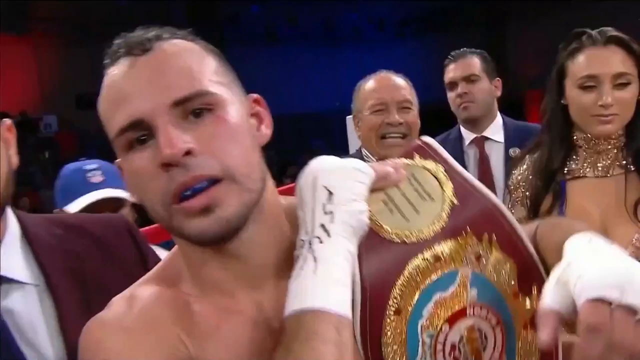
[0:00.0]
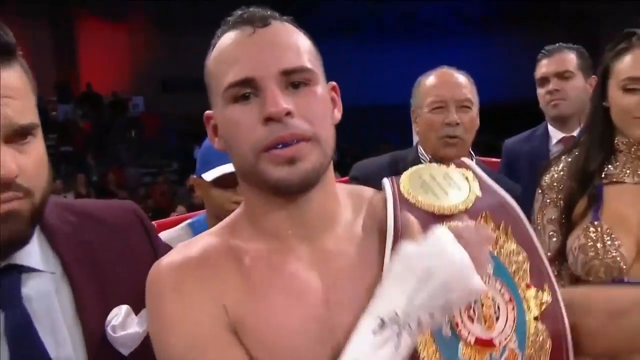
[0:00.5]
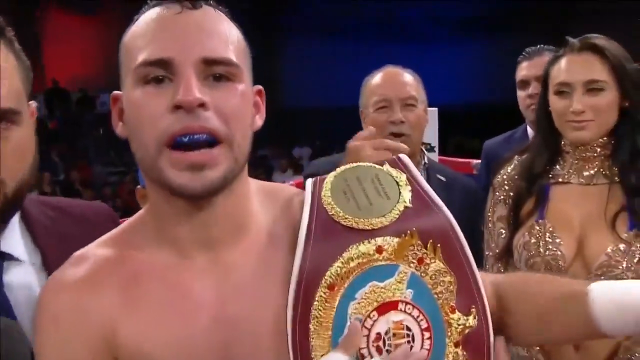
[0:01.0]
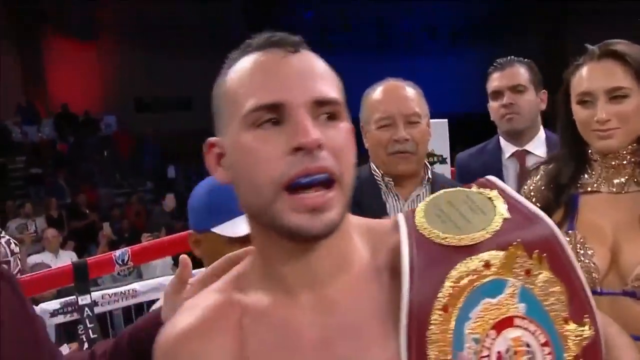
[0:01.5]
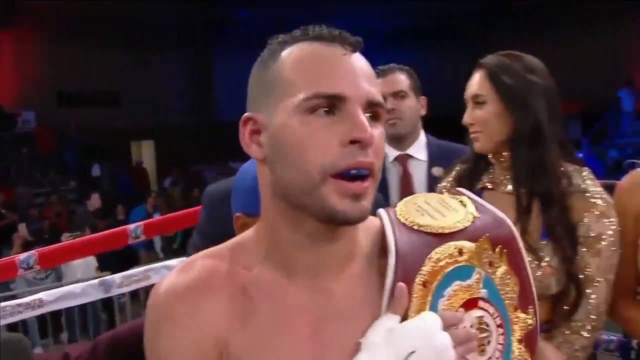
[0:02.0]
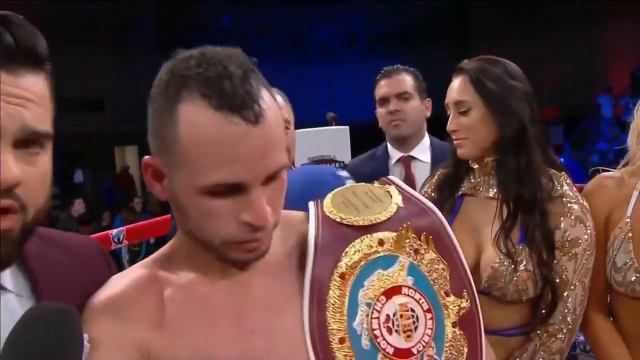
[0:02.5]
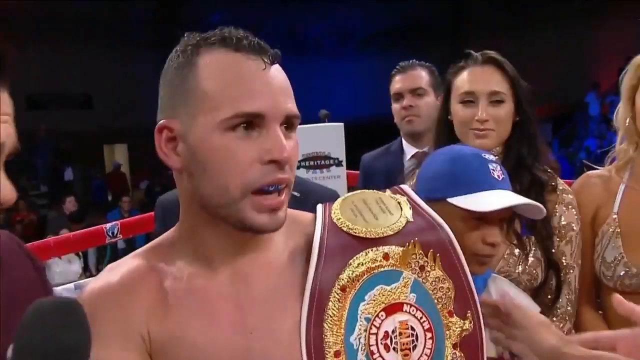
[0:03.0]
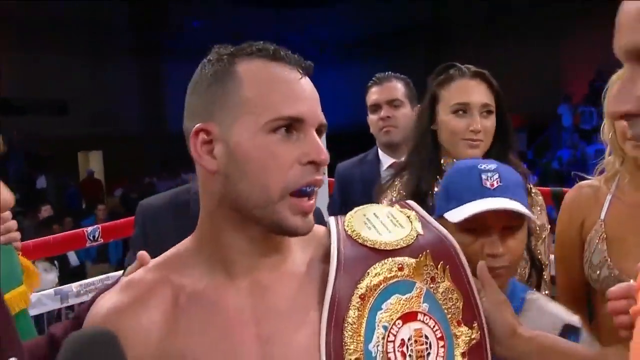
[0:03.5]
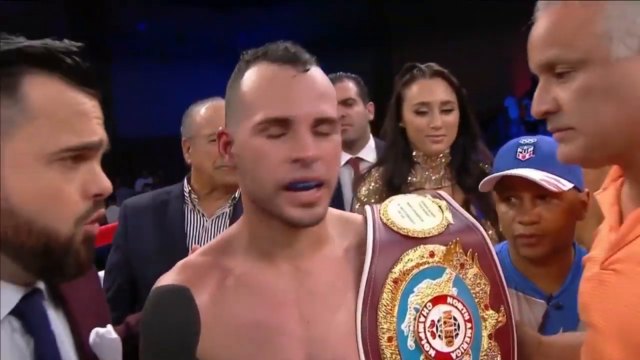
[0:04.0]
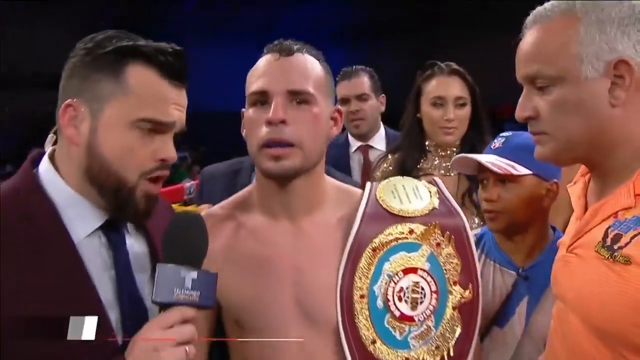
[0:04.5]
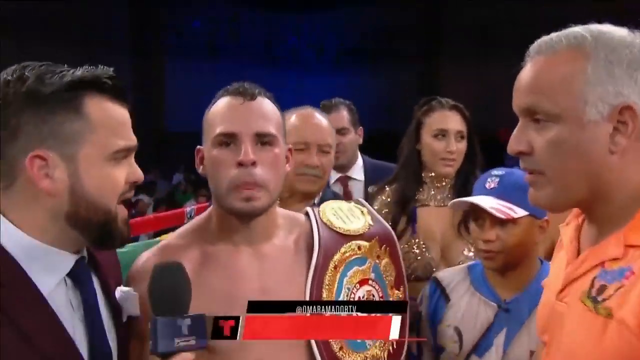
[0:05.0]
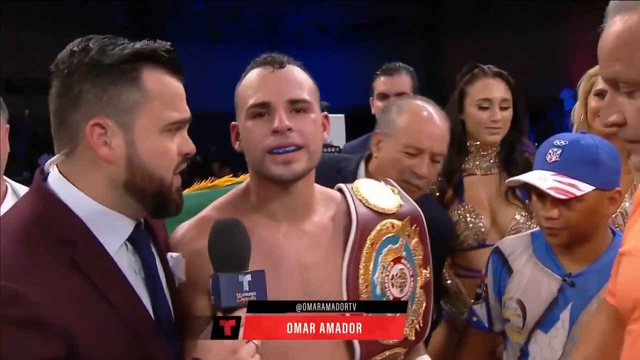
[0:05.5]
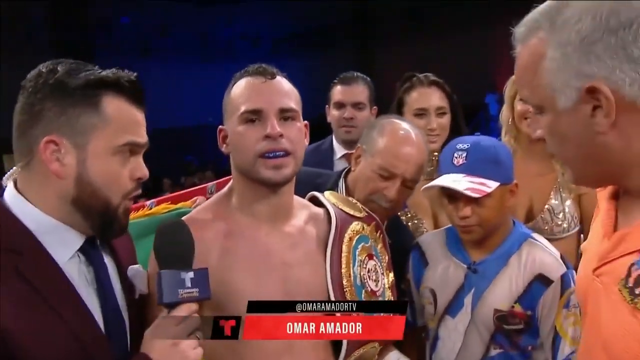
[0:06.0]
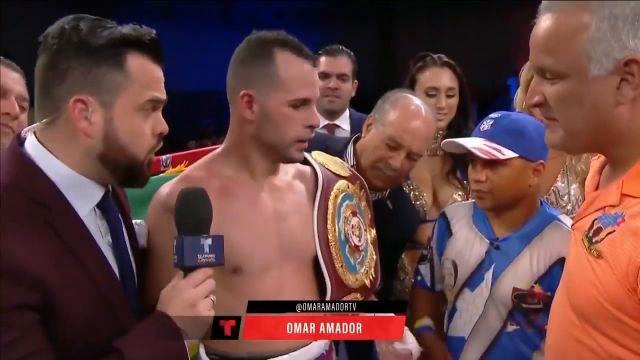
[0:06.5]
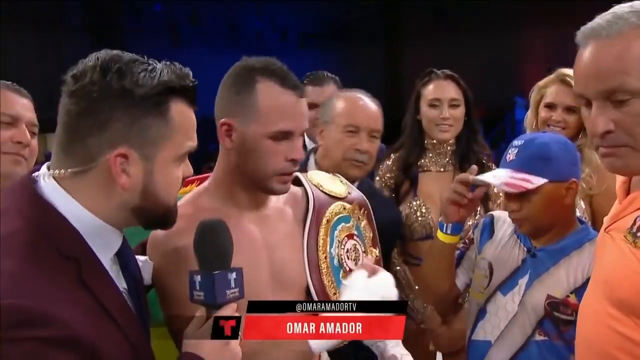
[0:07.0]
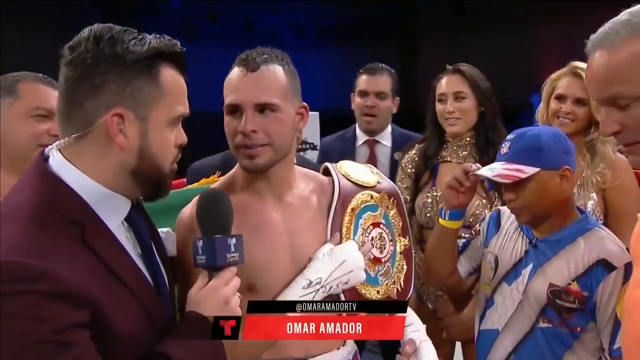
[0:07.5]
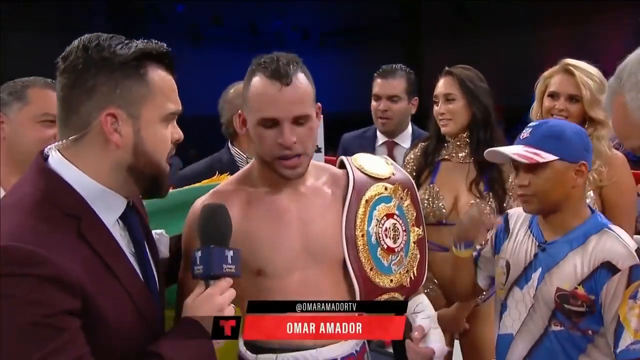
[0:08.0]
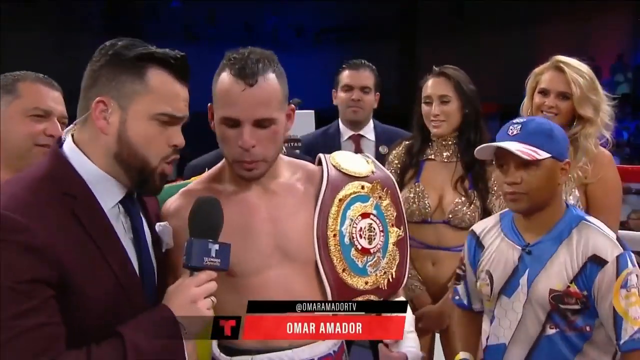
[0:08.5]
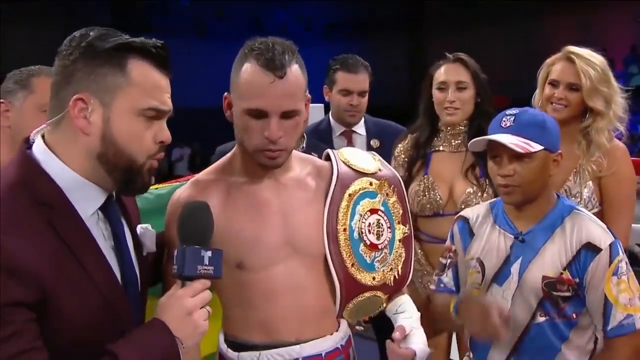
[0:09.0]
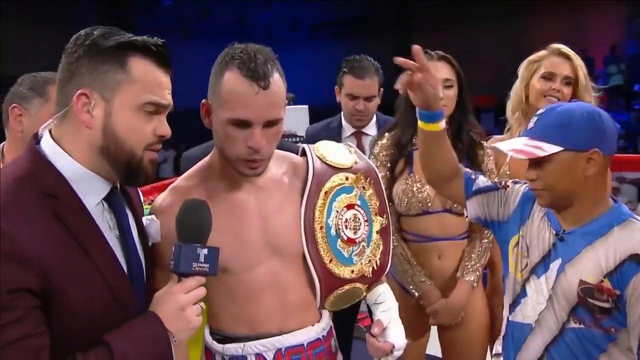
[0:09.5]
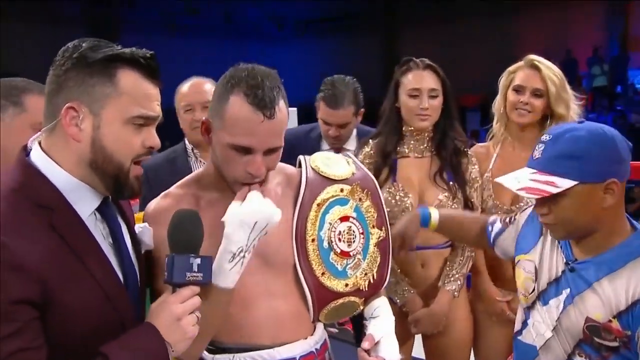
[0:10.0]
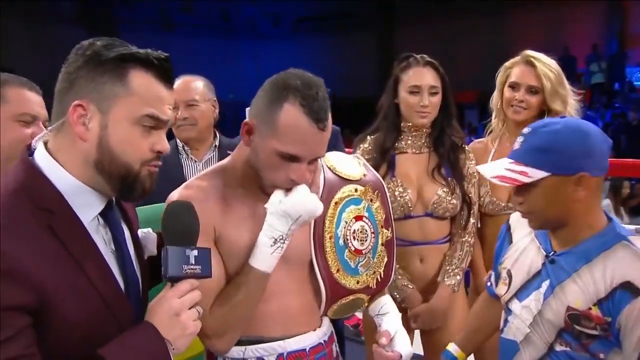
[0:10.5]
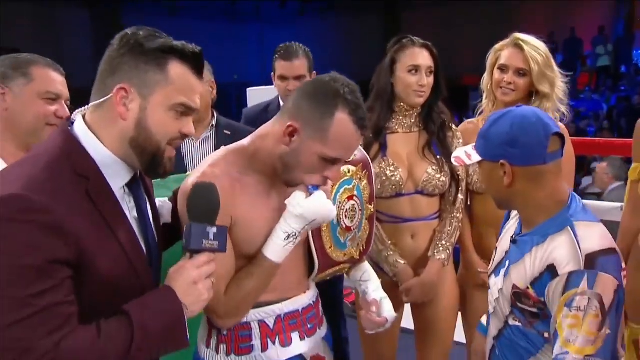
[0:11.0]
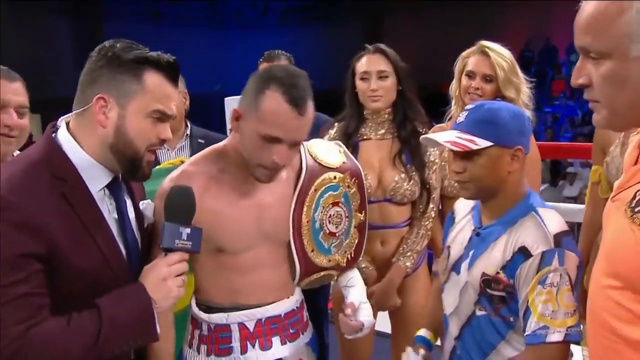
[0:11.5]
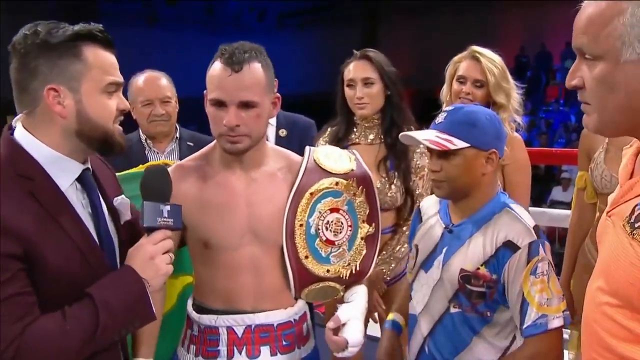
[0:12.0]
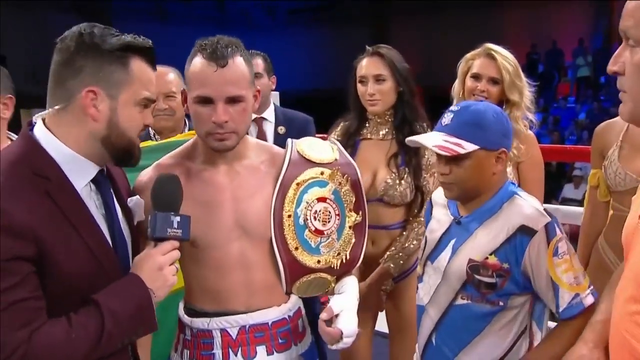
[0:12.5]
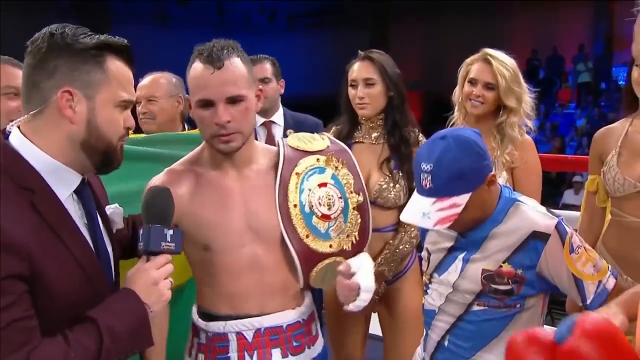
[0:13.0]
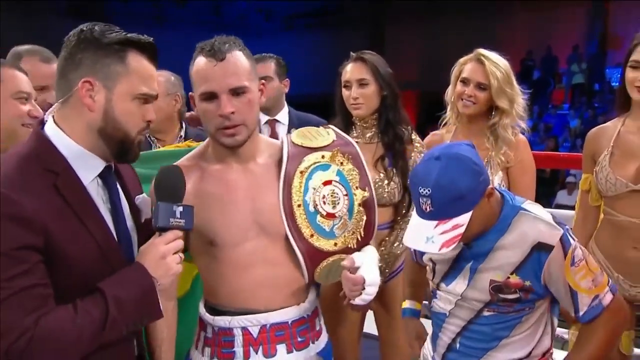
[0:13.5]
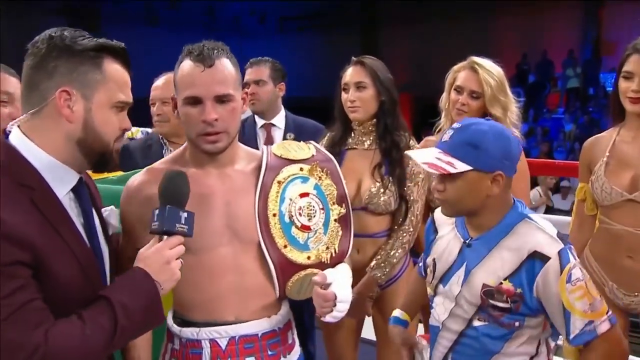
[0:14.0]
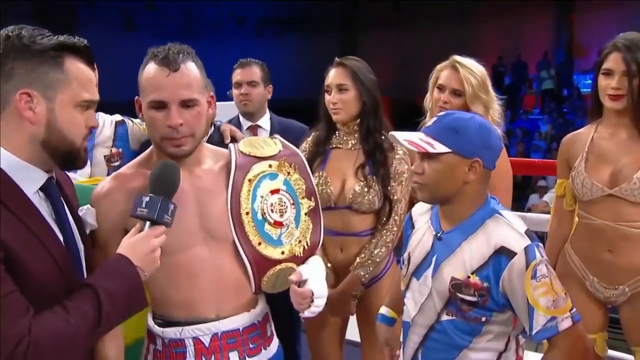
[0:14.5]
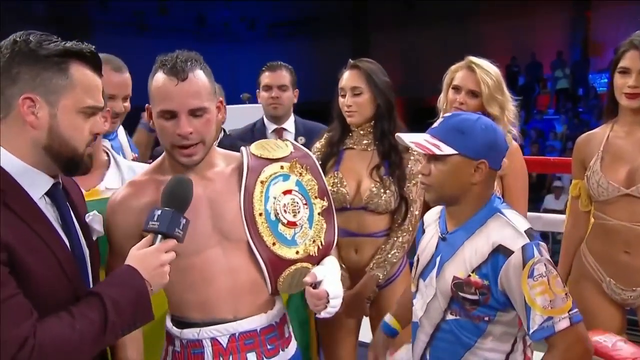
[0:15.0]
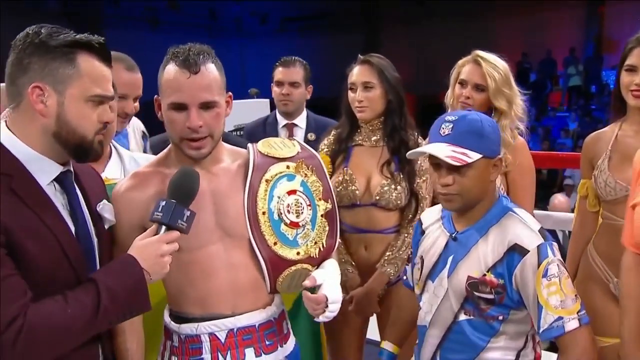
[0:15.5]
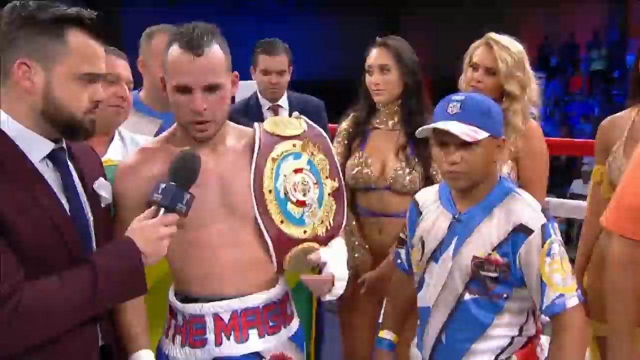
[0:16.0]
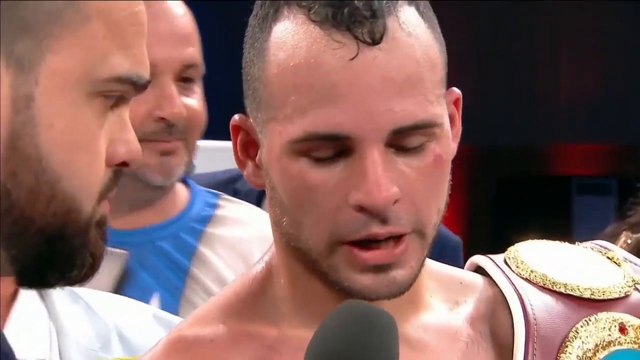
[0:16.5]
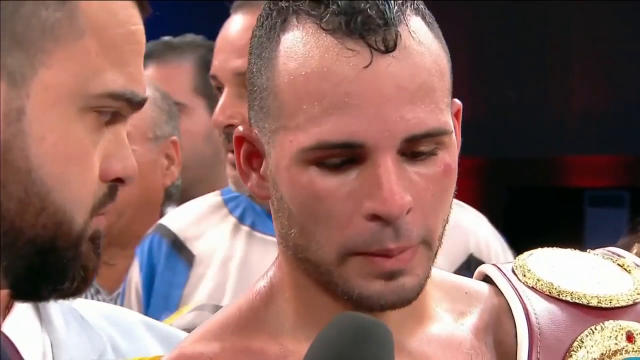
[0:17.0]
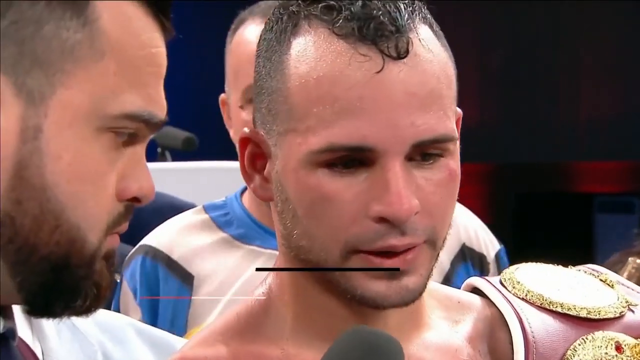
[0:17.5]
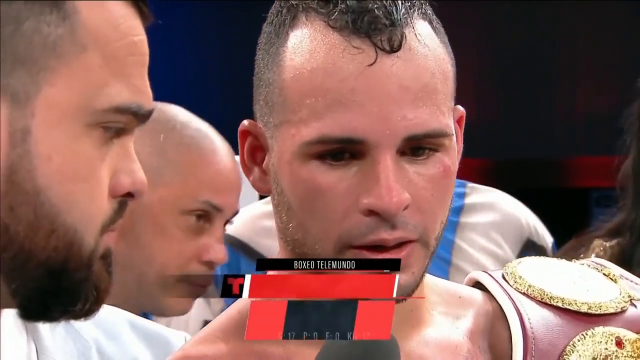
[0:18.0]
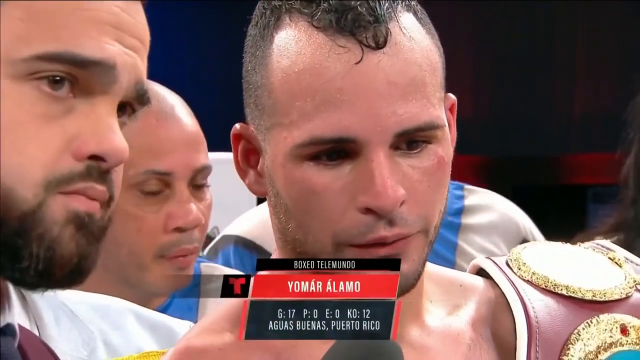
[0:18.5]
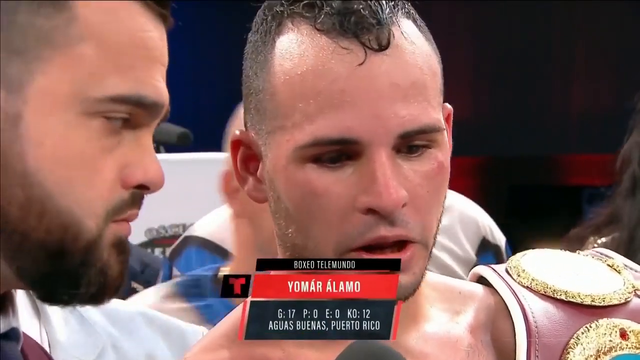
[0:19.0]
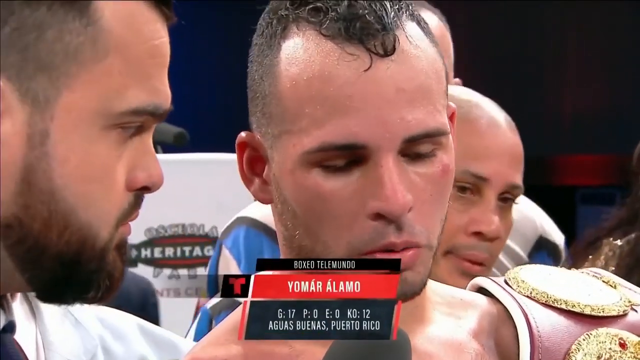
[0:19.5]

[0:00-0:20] A bare-chested boxer is in the foreground, with a gum shield that appears to be still between his lips. He has a title belt that is burgundy or brown with a white trim and the usual gold in the belt itself. On the left of the screen is a bearded man in a burgundy jacket, white shirt and dark blue tie. Across the boxer's left shoulder is an older man in a jacket and open-necked shirt, his right arm lifted so that his thumb and forefinger are visible behind some of the decoration on the belt. Further to the right, partly obscured behind a young woman, is another man in a dark jacket and white shirt. On the far right of the screen is a young woman with dark hair in a very low-cut, revealing top with a kind of gold collar. The boxer is speaking. Text at the bottom of the screen in a red bar with white lettering identifies him: "Omar Amador". The man in the burgundy jacket on the left comes further into shot, holding a microphone in his right hand.